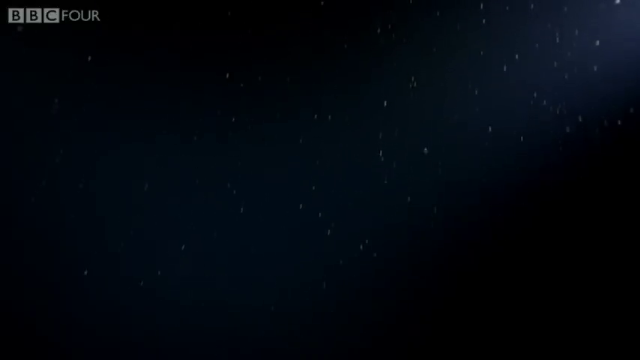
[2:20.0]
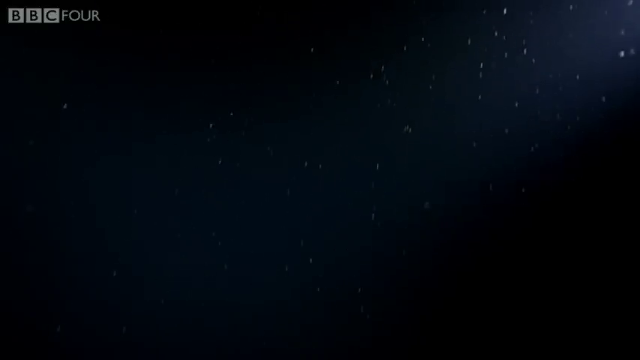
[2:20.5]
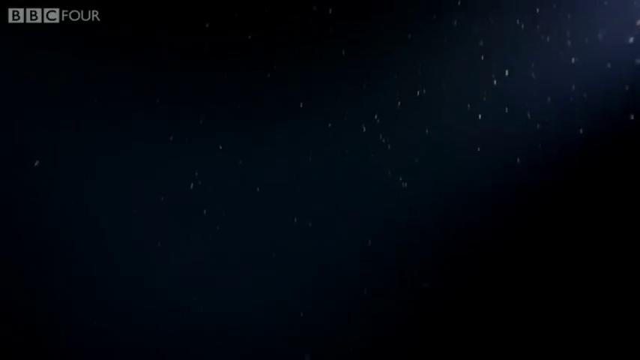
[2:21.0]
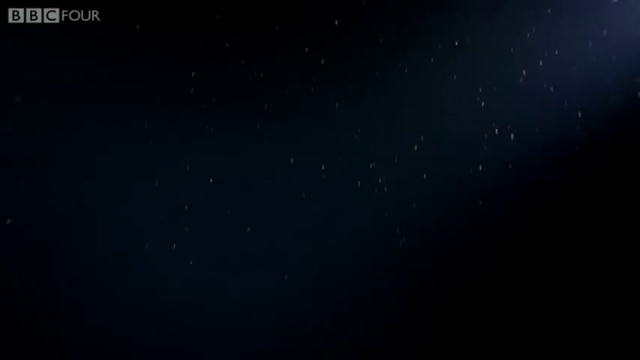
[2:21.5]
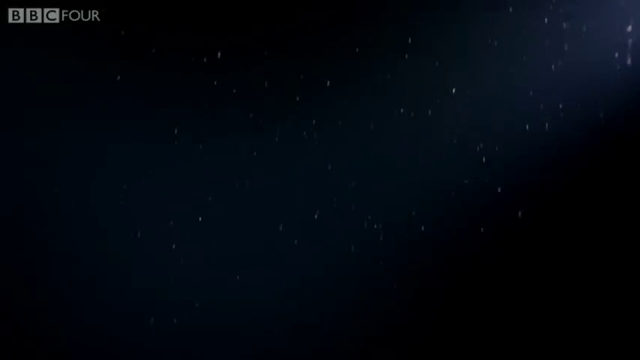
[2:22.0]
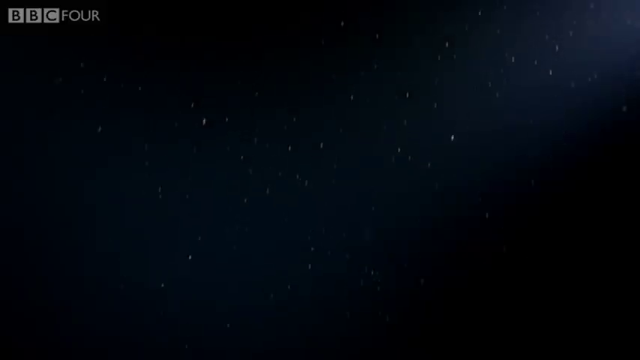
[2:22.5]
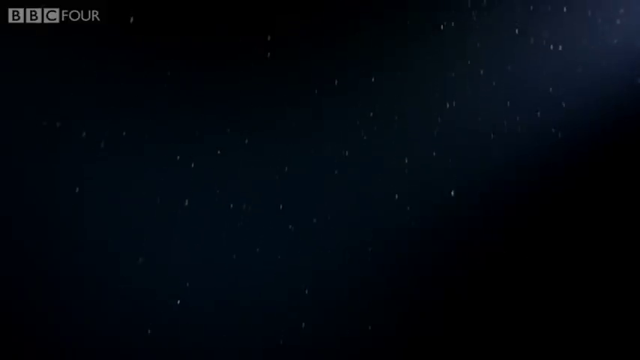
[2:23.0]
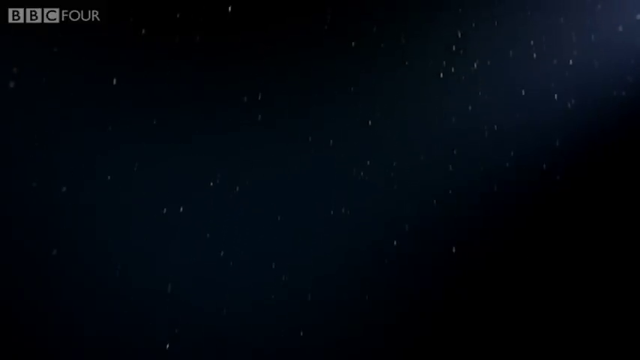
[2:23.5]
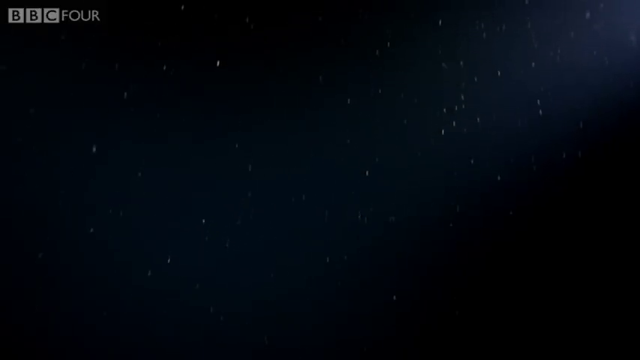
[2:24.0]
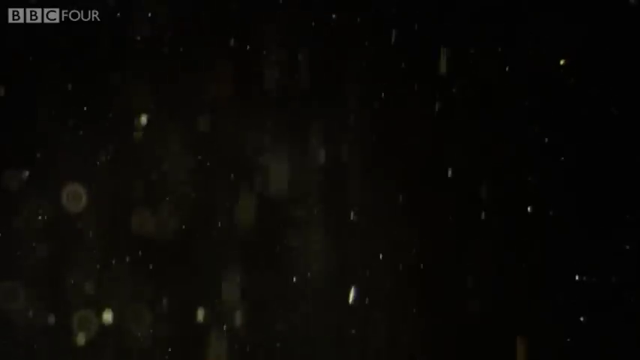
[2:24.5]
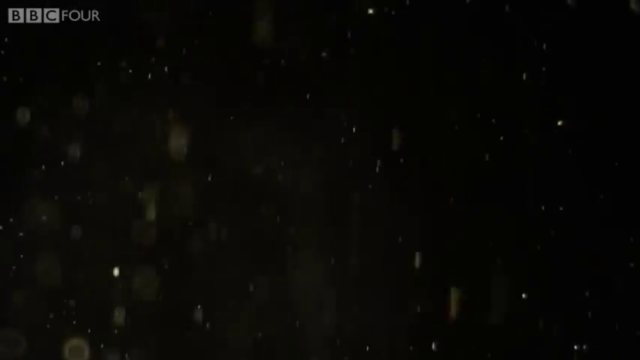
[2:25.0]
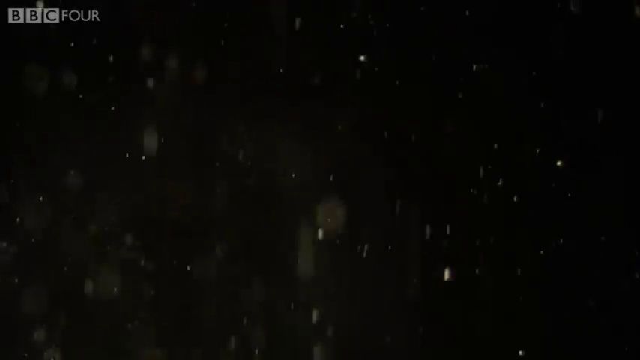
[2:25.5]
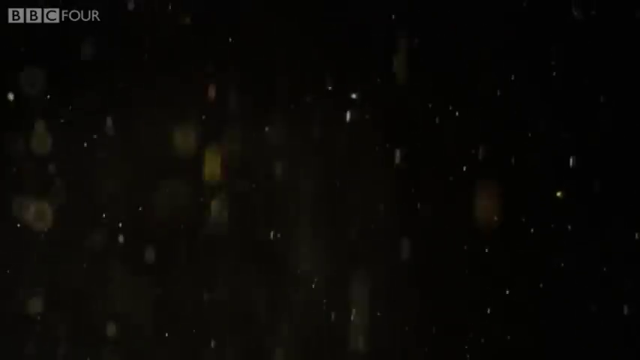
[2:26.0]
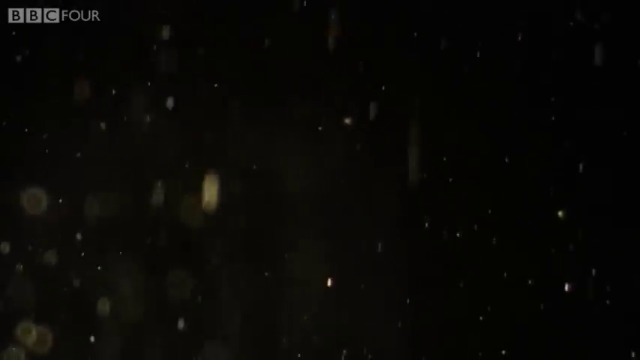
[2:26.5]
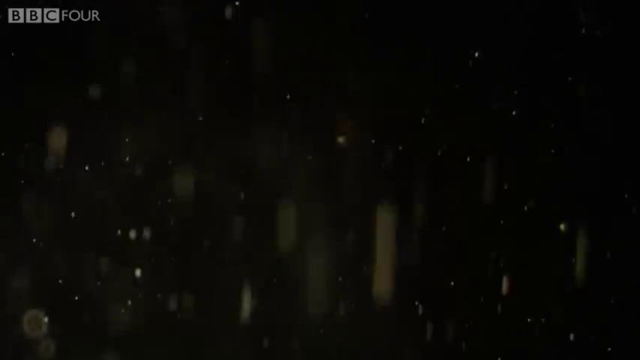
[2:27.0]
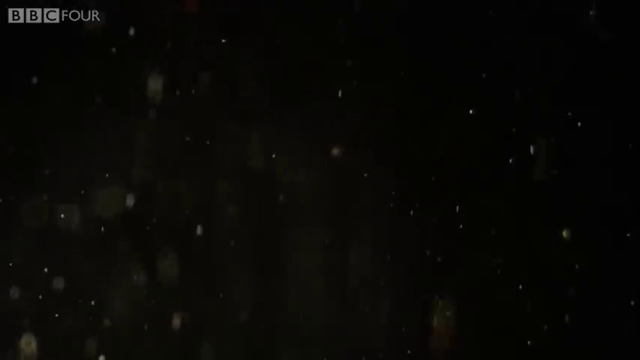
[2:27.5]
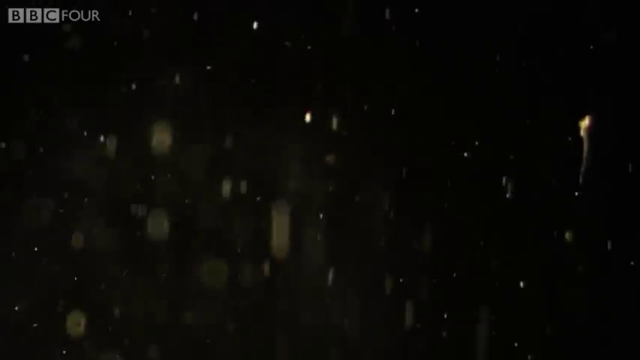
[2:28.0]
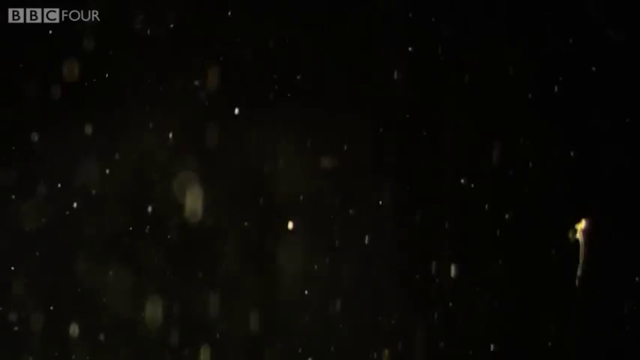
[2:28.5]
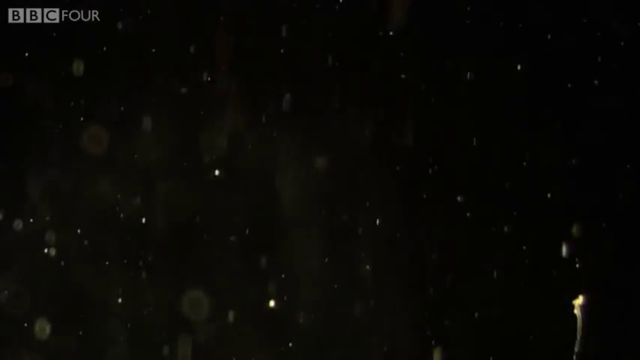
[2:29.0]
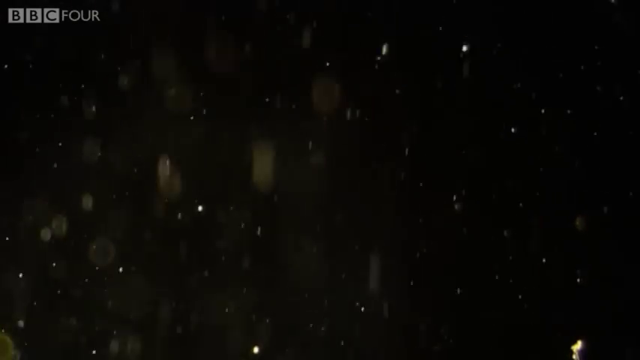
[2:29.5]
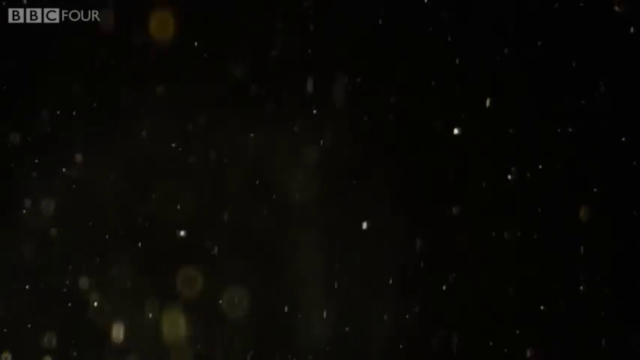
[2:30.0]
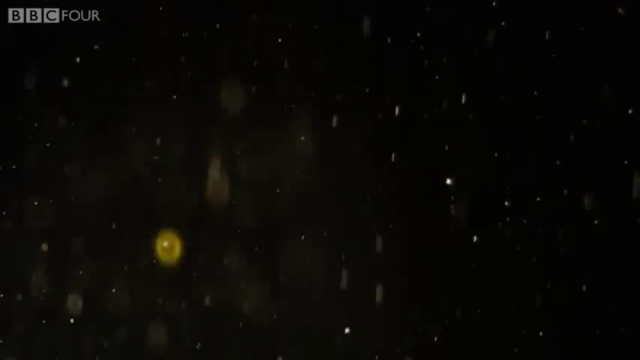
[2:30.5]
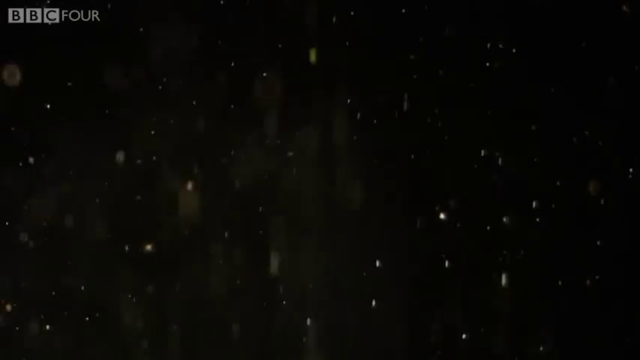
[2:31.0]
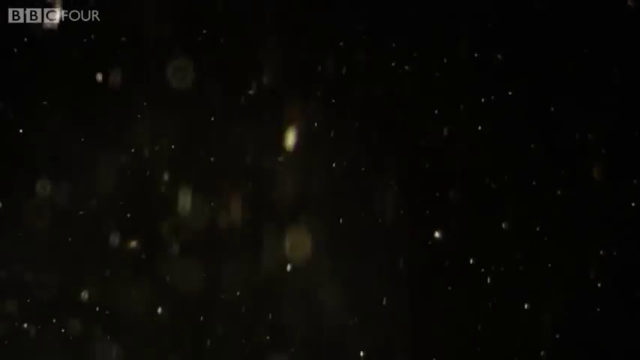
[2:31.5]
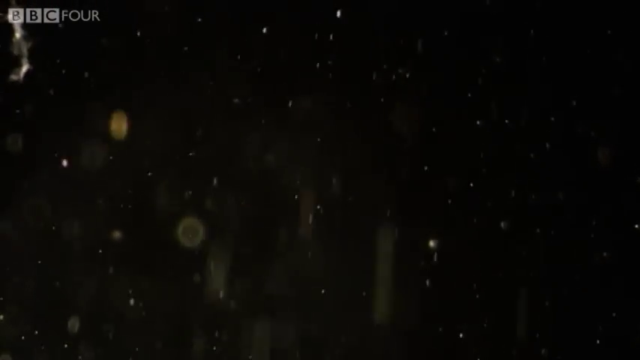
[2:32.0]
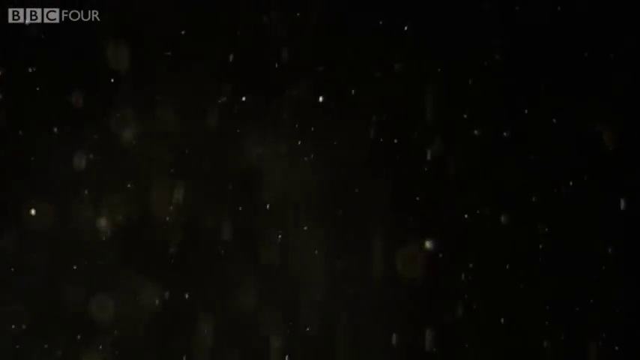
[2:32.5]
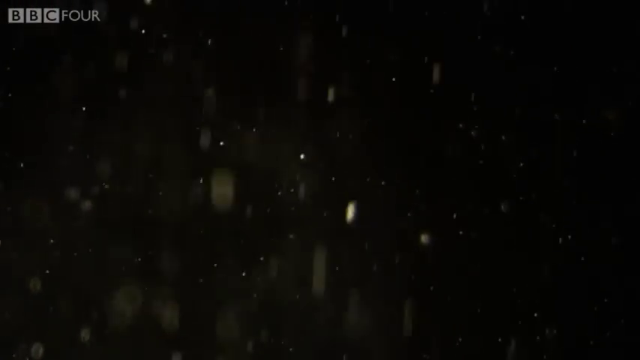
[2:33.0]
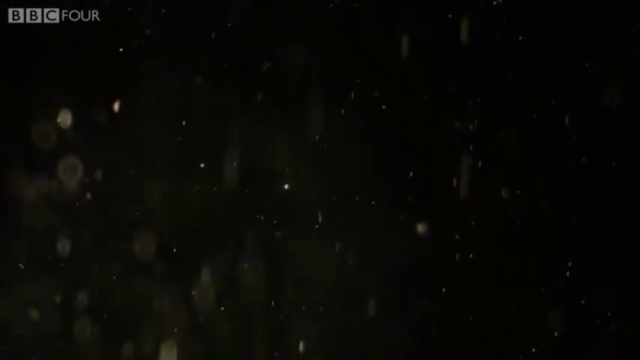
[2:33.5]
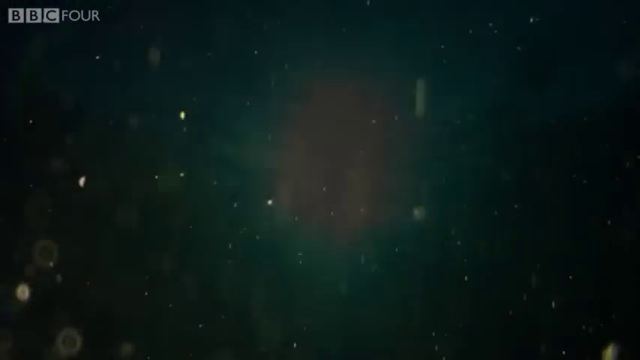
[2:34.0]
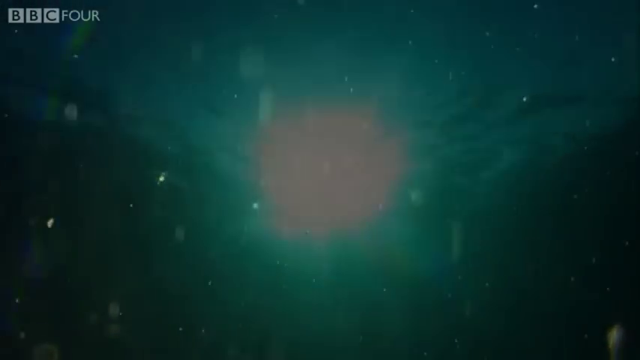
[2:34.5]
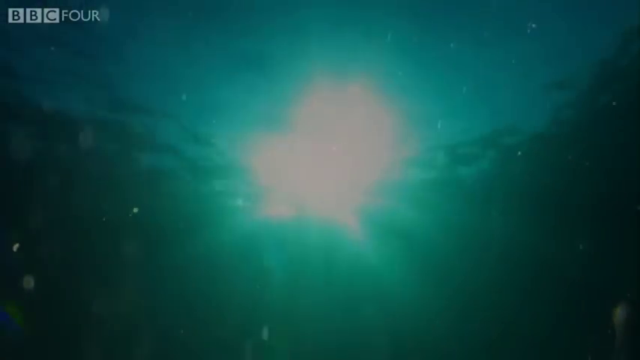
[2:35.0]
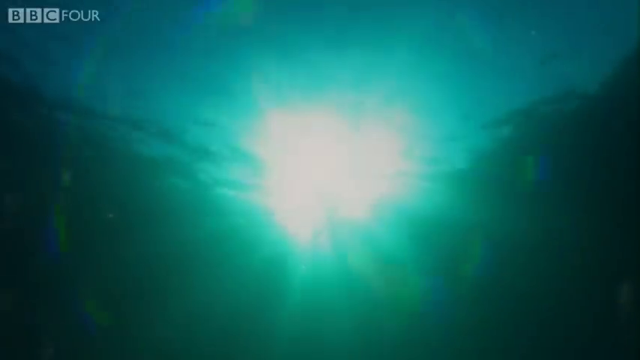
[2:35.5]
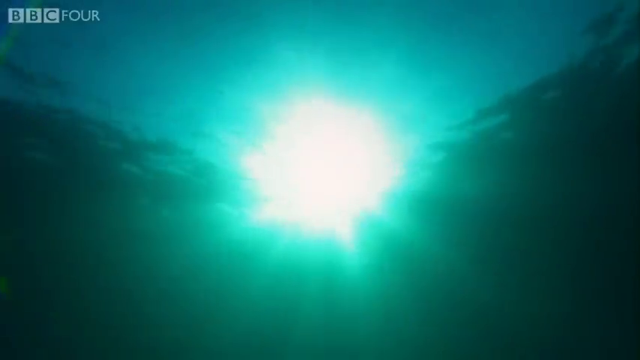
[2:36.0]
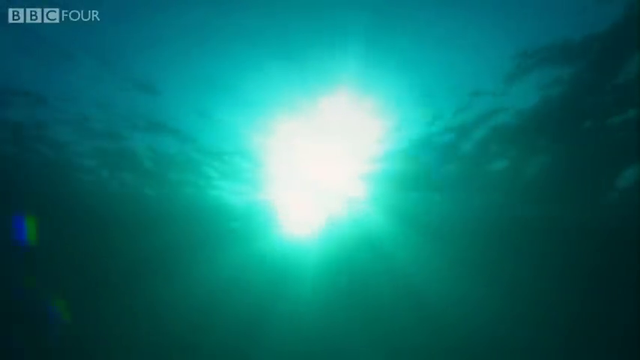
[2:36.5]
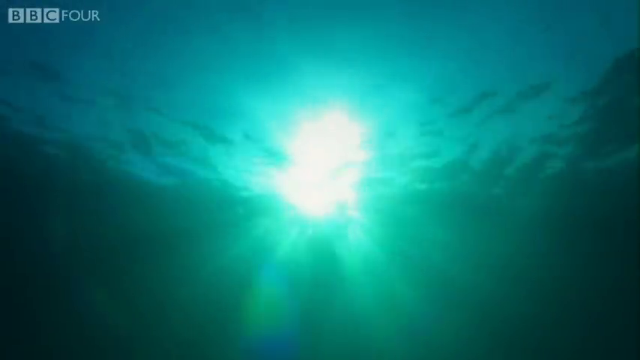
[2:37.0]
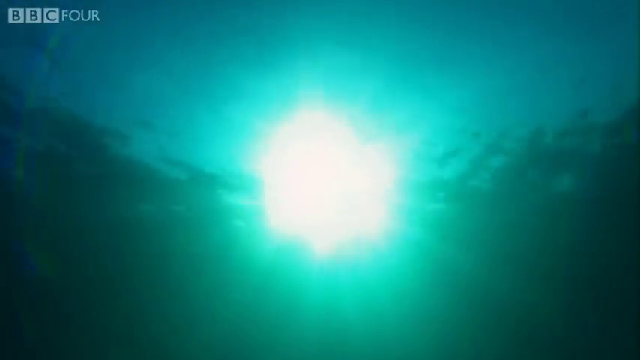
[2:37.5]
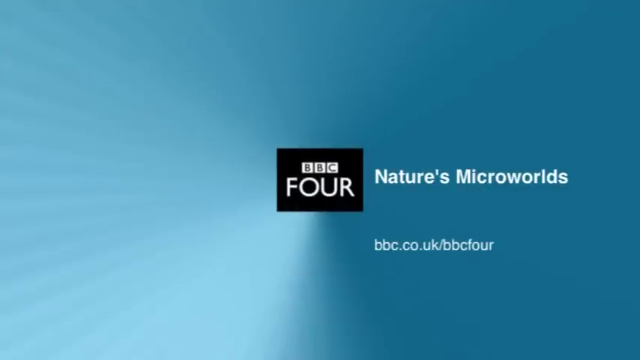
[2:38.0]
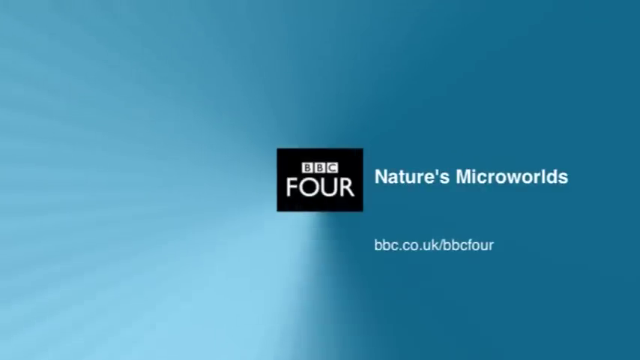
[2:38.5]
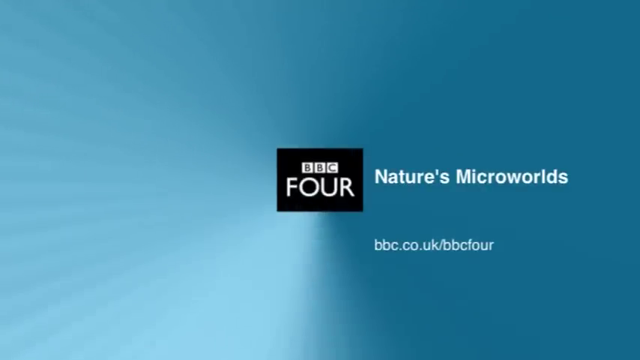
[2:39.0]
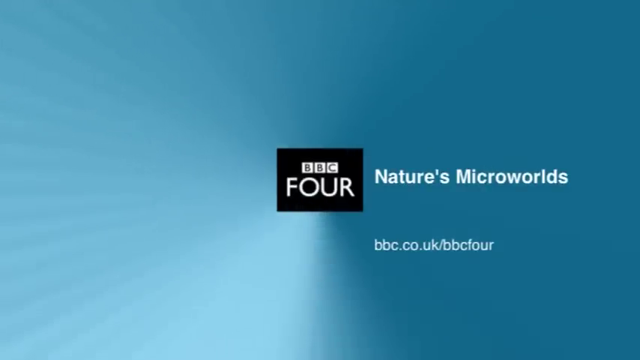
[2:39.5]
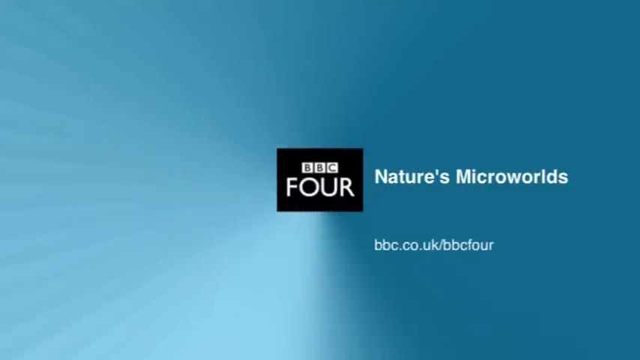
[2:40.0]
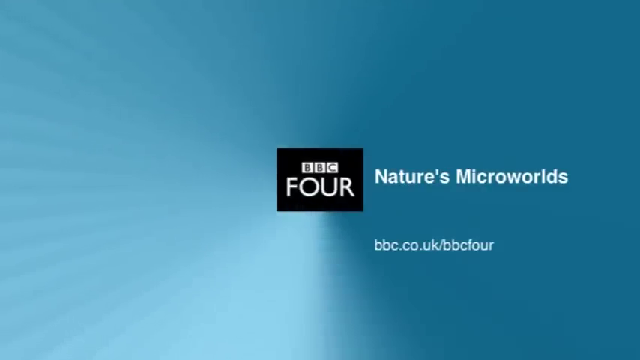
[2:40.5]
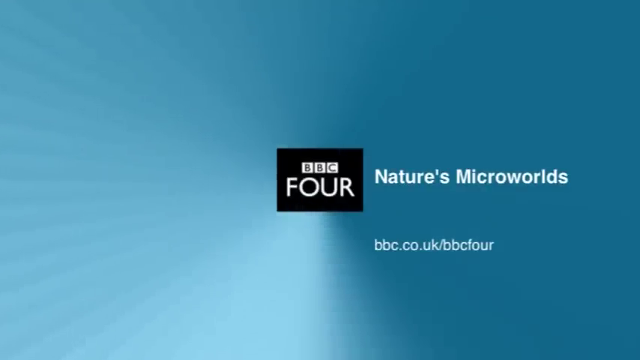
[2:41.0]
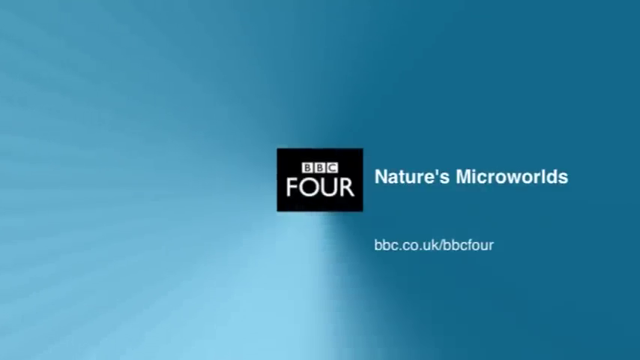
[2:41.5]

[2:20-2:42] In the deep sea, plankton and other small creatures float all through the water against a very black, night-like background. The tiny creatures look like little white specks as they float by in front of the camera. The video then shows a diver's view from underwater looking up at the surface of the water, with the sun shining on the other side of the surface. It ends with a logo reading "BBC FOUR, Nature's Microworlds", and underneath it a link to a website: "bbc.co.uk/bbcfour".